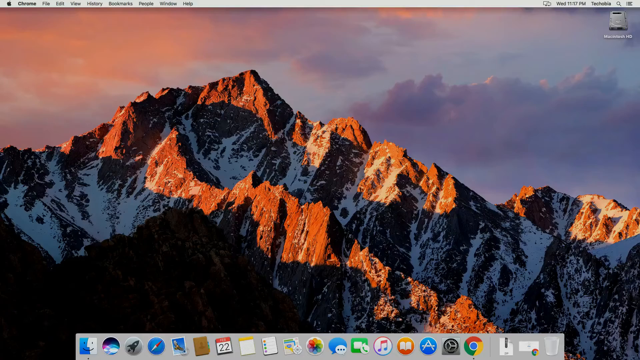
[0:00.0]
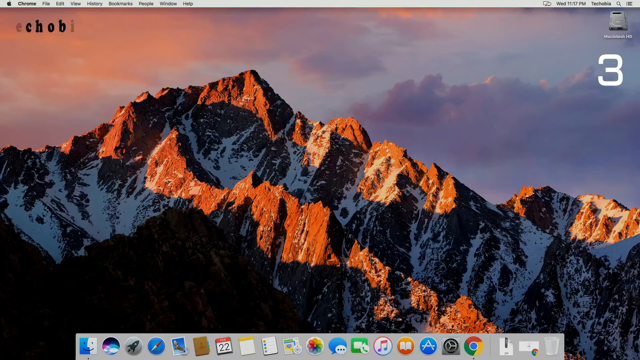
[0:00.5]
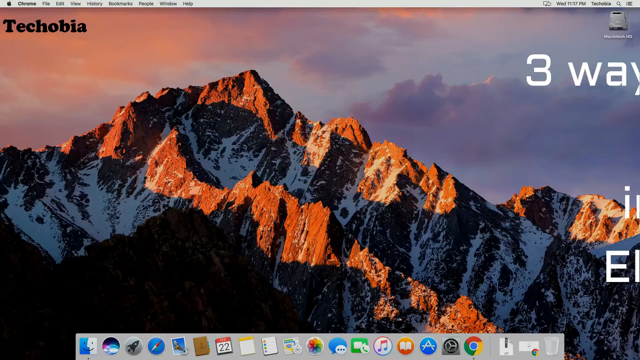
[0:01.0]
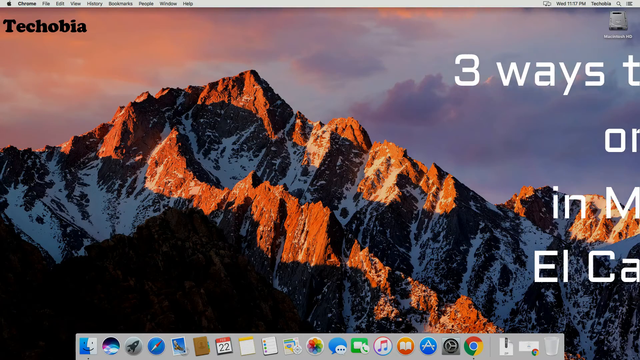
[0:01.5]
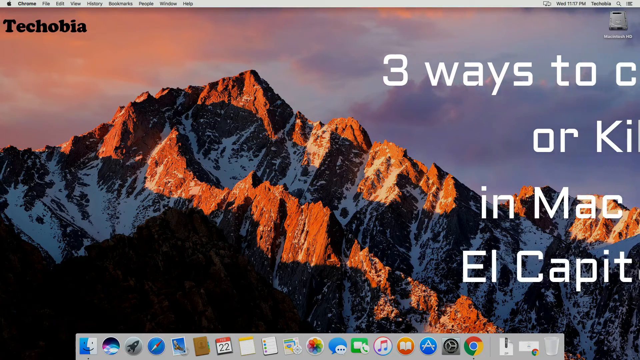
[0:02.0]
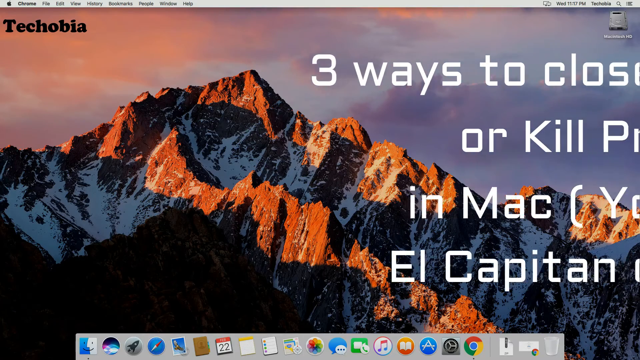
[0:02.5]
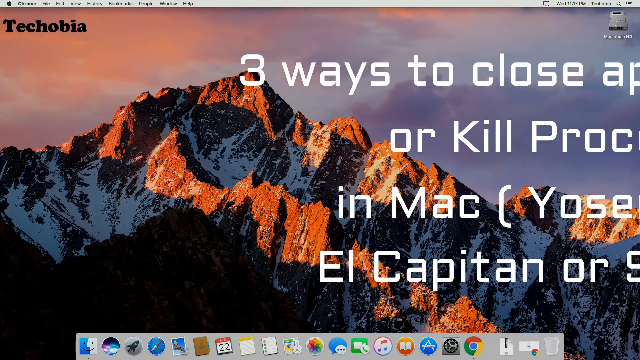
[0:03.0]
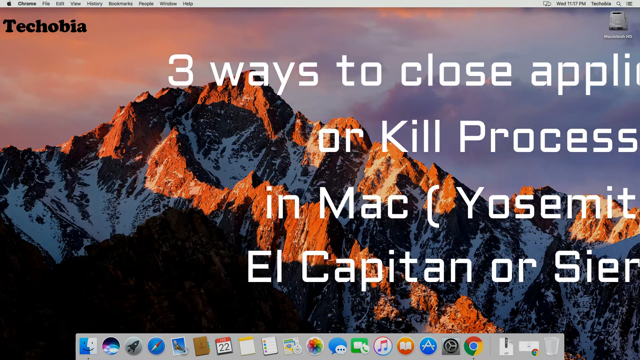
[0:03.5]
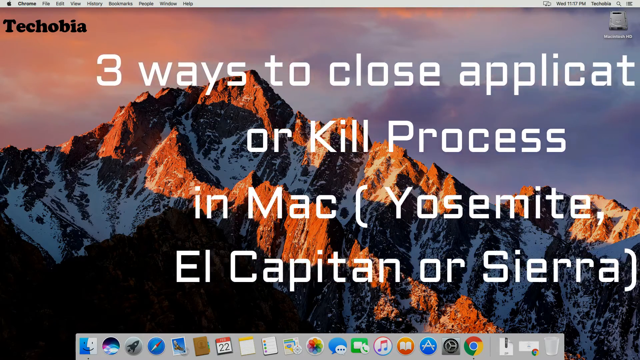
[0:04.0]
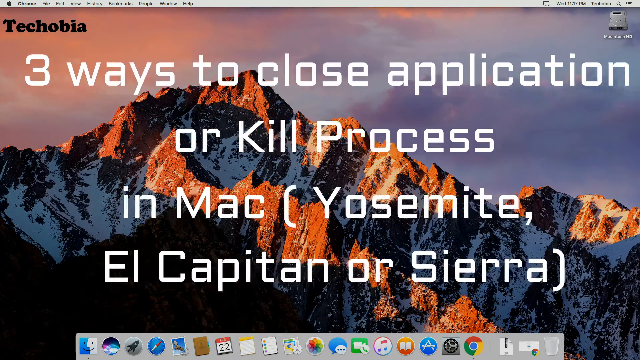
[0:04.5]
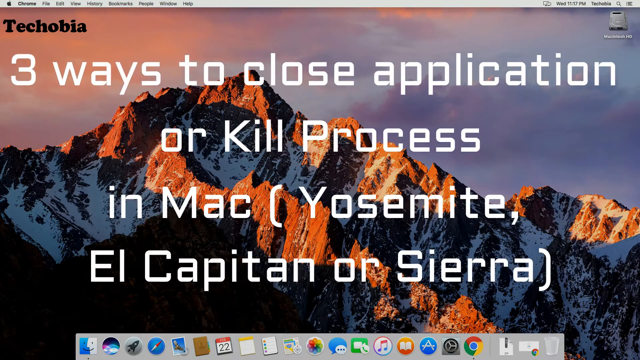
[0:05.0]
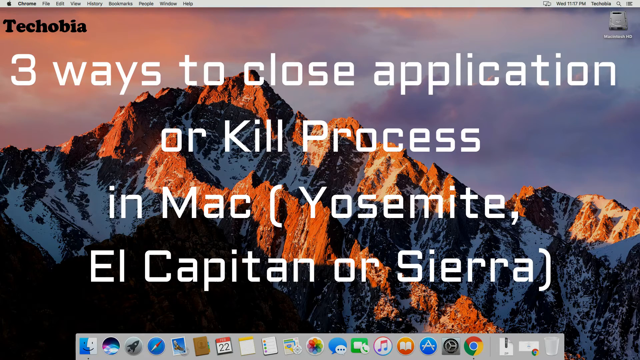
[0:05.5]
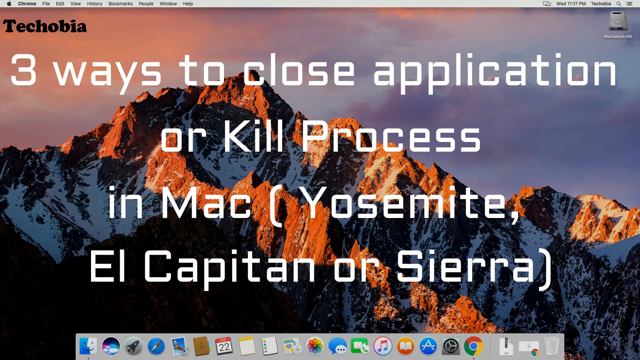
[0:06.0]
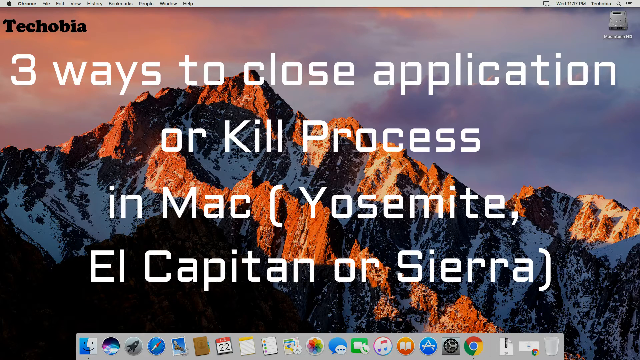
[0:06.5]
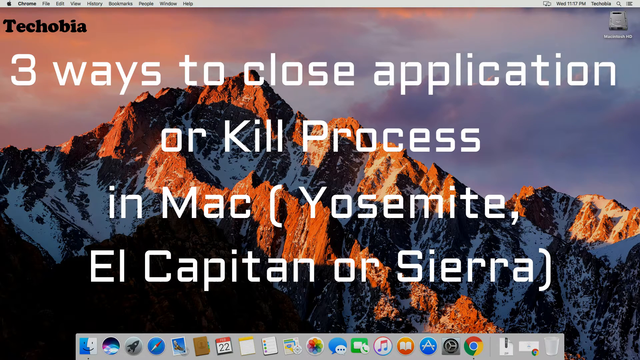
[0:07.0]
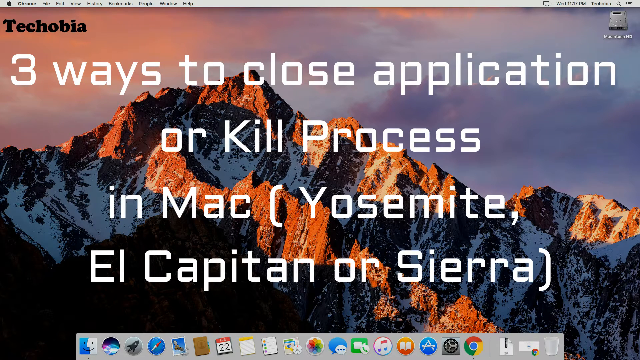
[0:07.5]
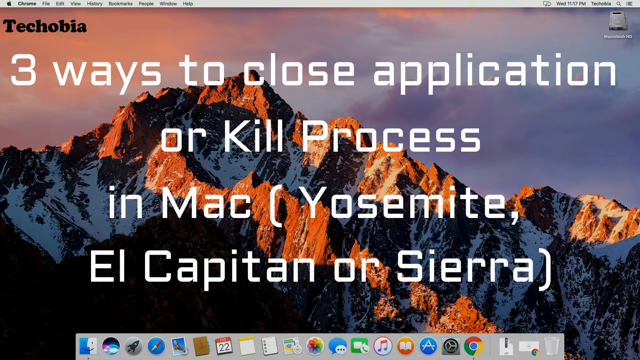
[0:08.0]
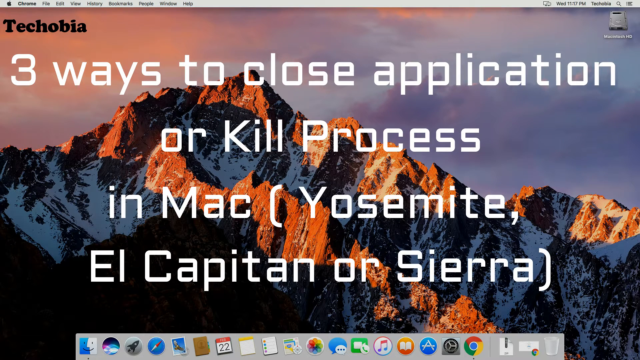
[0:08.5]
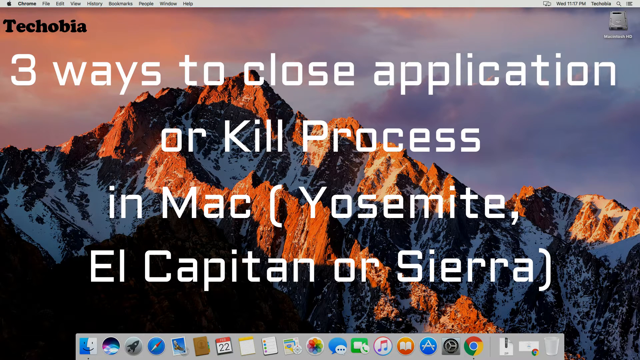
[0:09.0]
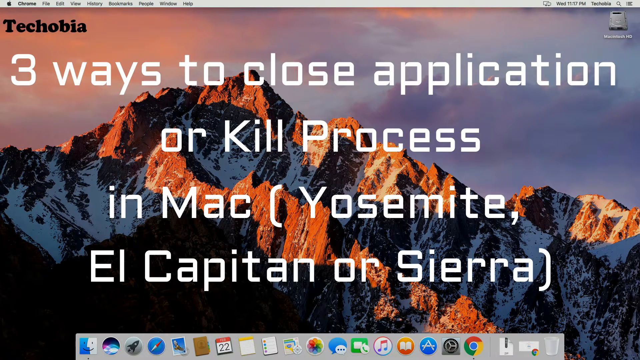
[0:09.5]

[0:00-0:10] A computer screen shows a desktop background of a mountain with some snow on it; the part without snow is a kind of brownish-orange, and there is a lot of shadow on it. In the sky behind it, the sun peeks through clouds. The clouds on the right side are dark, as if it is about to rain, while those on the left are kind of pinkish-reddish. The sun seems to be rising in the east. In the top right-hand corner of the background it says "Macintosh HD." Across the very top is a menu with the Apple logo, then "Chrome," then "File," "Edit," "View," "History," "Bookmarks," "People," "Window," and "Help." On the right-hand side are two text message boxes, then "WED" and "11:17 p.m.," a magnifying glass, and the word "Techobia." Words in all white appear on the screen: "three ways to close application or kill process in Mac," with "Yosemite, El Capitan, or Sierra" in parentheses.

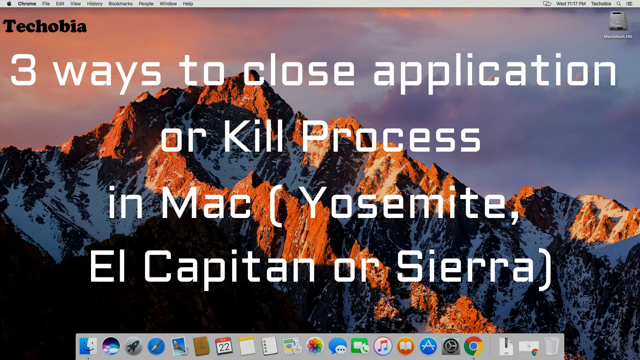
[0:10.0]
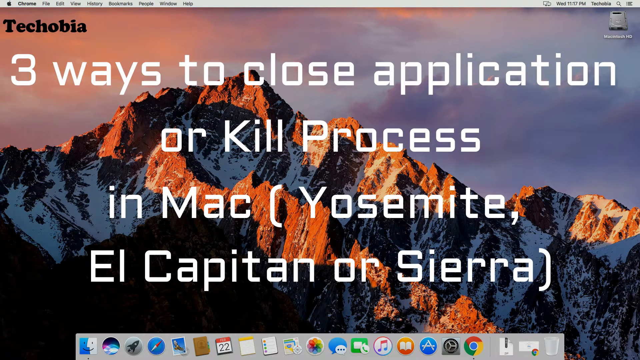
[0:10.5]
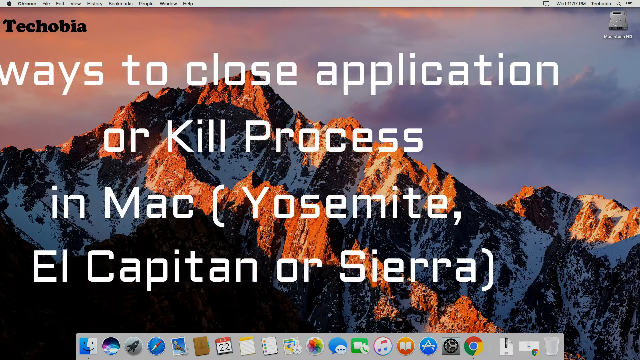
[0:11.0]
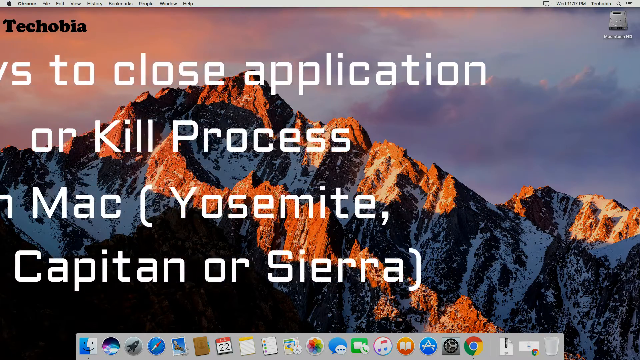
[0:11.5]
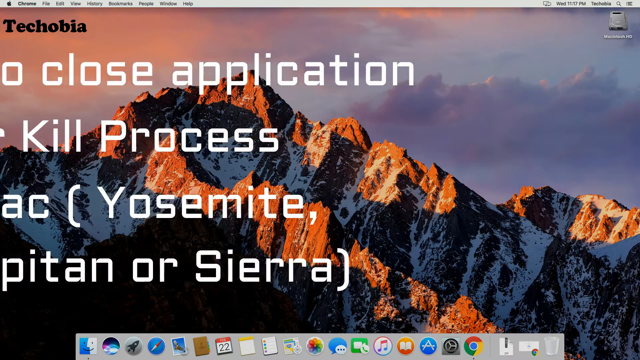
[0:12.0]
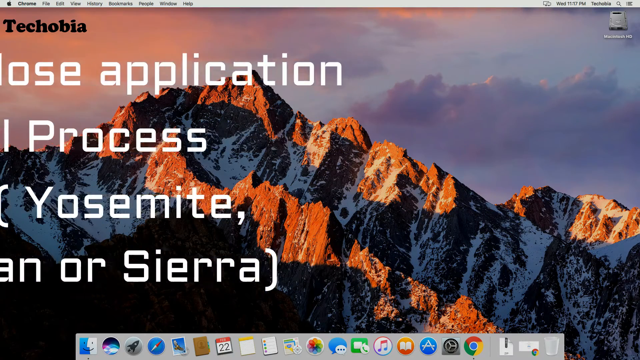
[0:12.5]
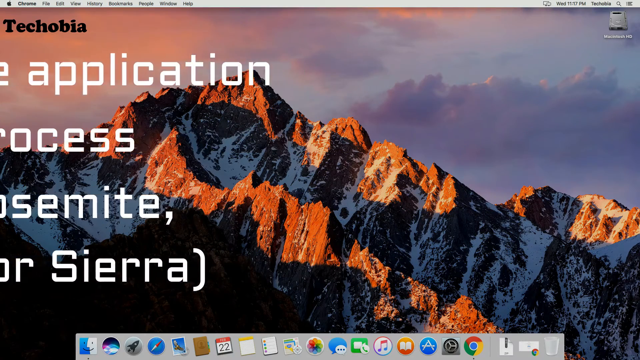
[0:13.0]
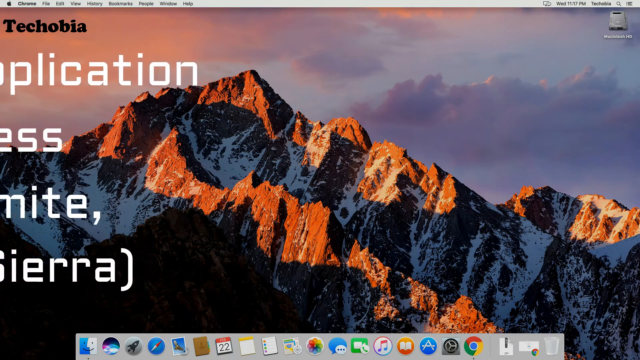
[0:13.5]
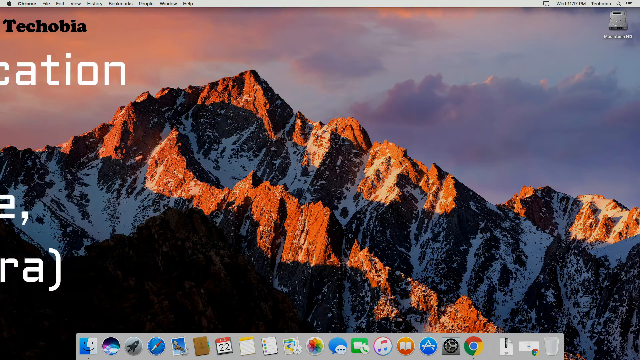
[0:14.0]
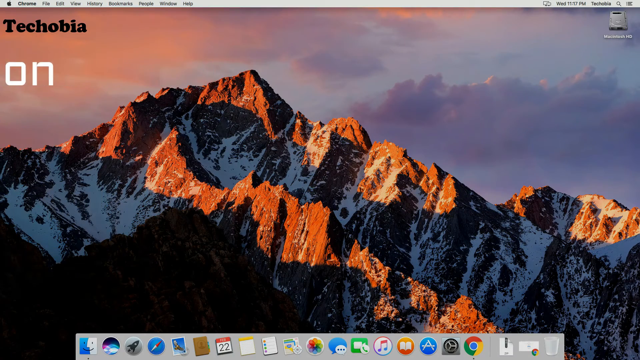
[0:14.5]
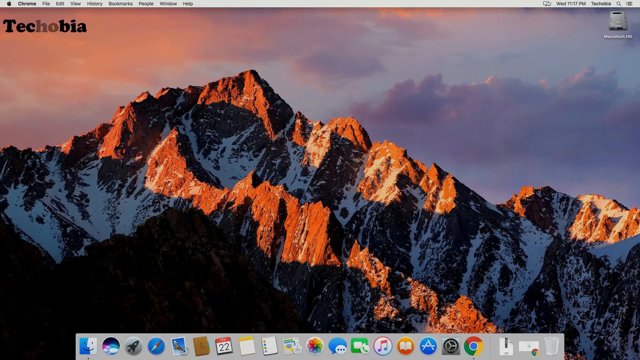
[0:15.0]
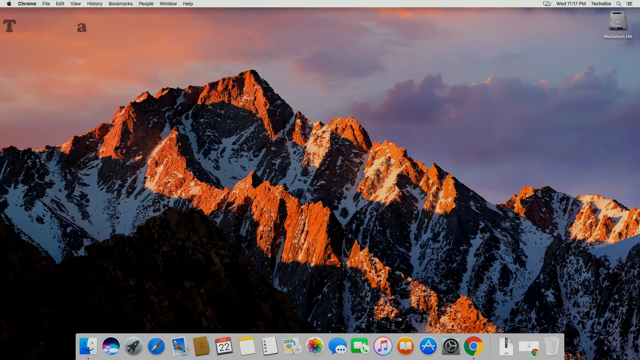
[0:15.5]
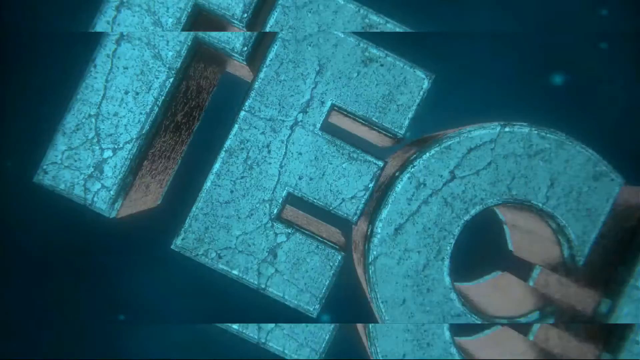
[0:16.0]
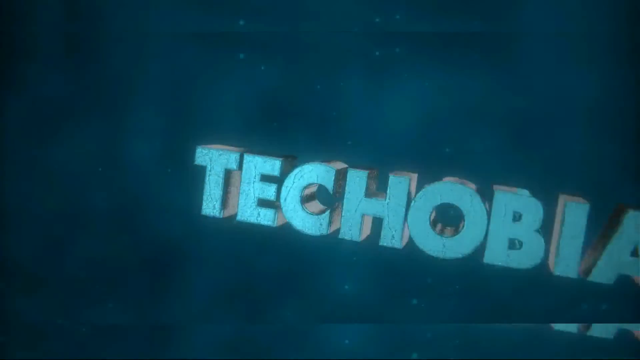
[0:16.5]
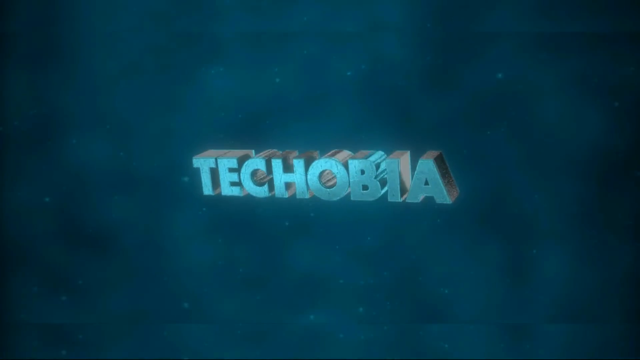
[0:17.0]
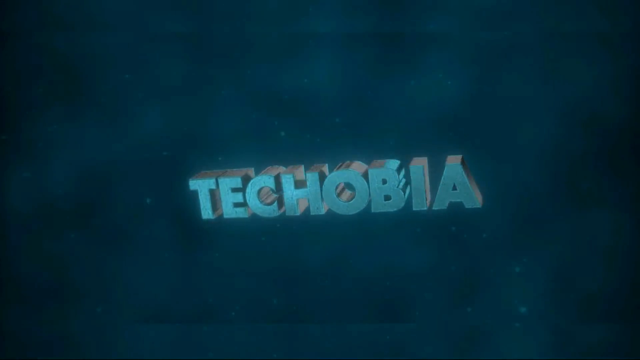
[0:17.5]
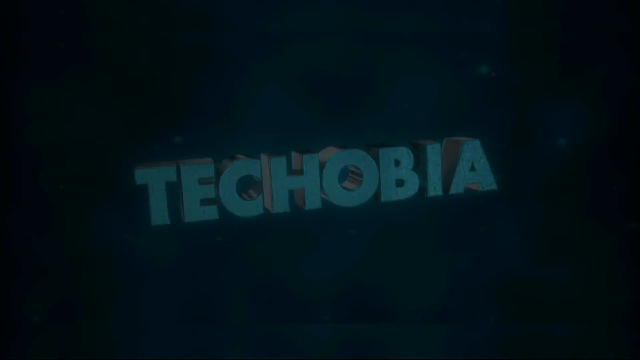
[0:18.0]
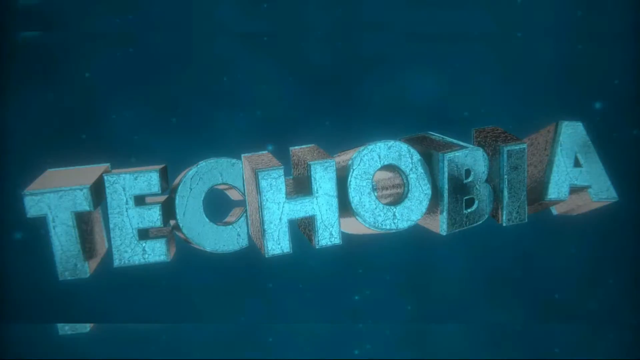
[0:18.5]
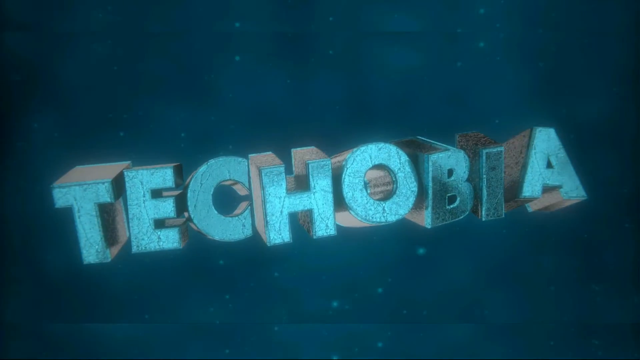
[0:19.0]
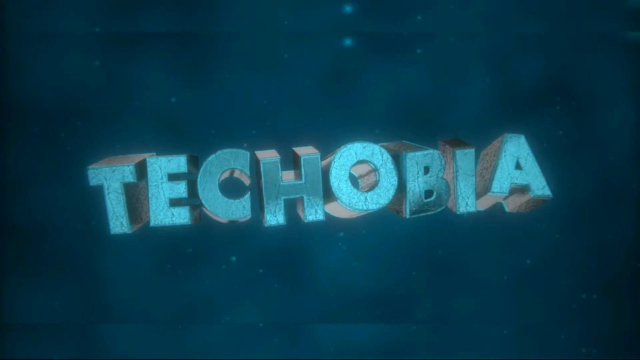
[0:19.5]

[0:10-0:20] The mountain is in the background with the words "three ways to close application or kill processes in Mac (Yosemite, El Capitan, or Sierra)." The words start to move left and off the screen. As they do, the word "Techobia" on the top left-hand side of the screen goes away. A sort of 3D version of the word "Techobia" then appears on the screen and moves backwards and forwards toward the screen. The letters are all a bluish aquamarine color, and they then start to take different formats from each other, one slanted and another straight up.